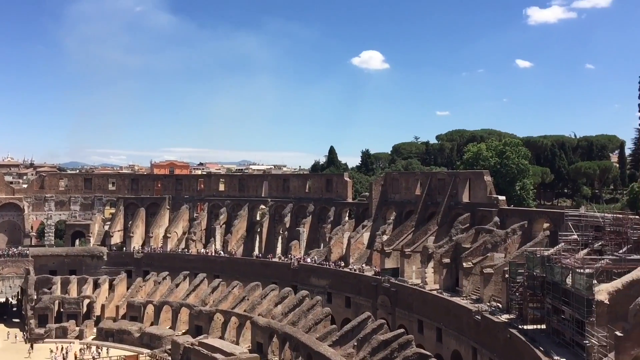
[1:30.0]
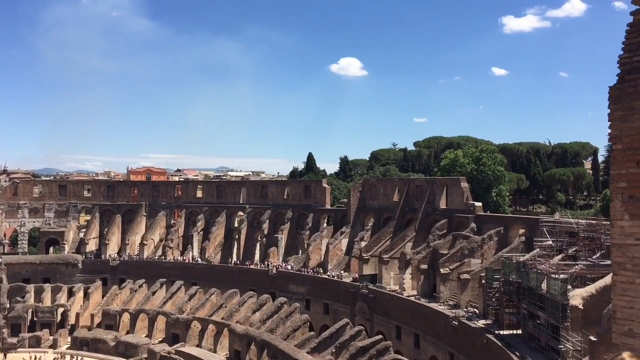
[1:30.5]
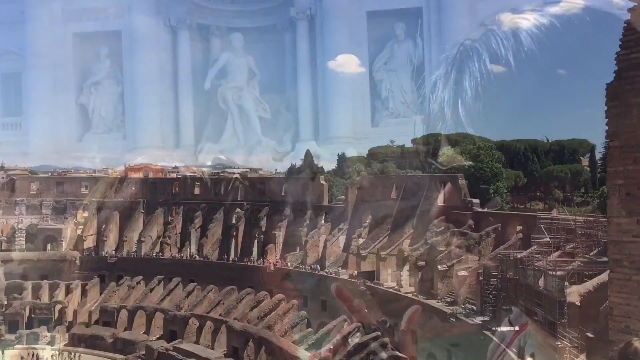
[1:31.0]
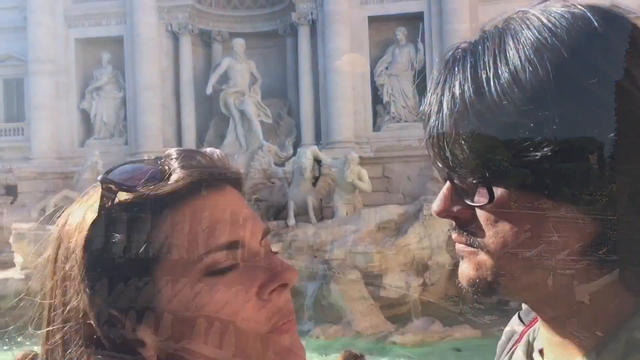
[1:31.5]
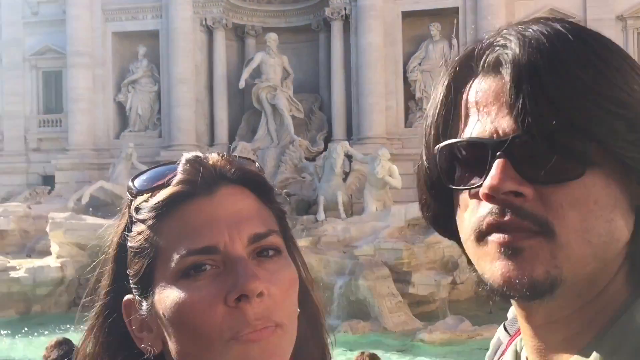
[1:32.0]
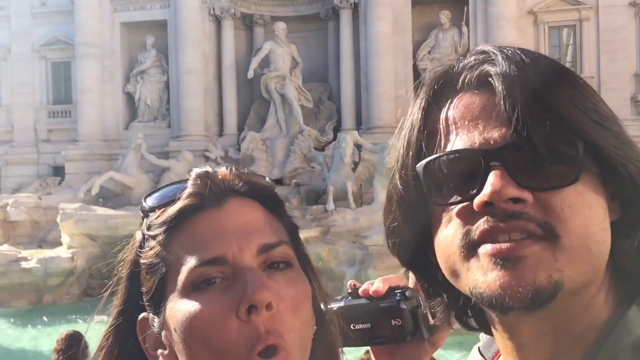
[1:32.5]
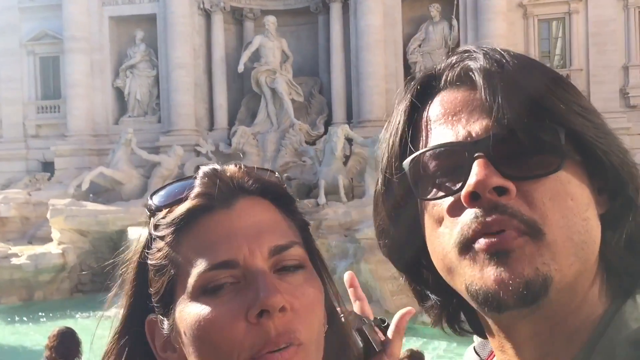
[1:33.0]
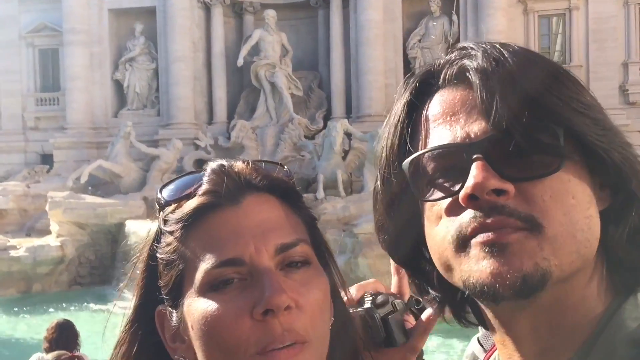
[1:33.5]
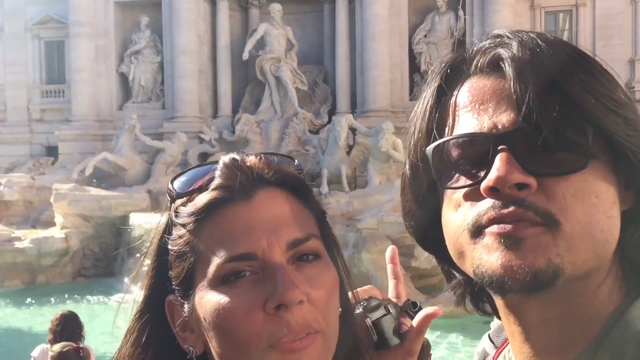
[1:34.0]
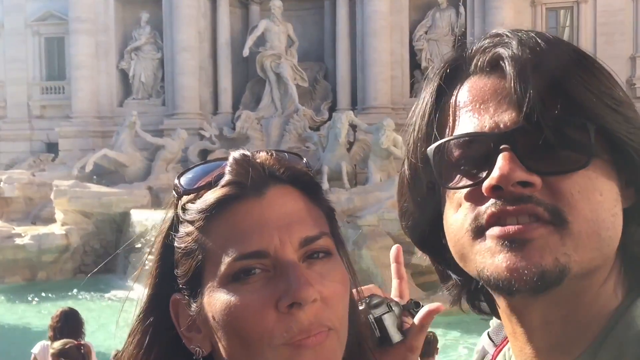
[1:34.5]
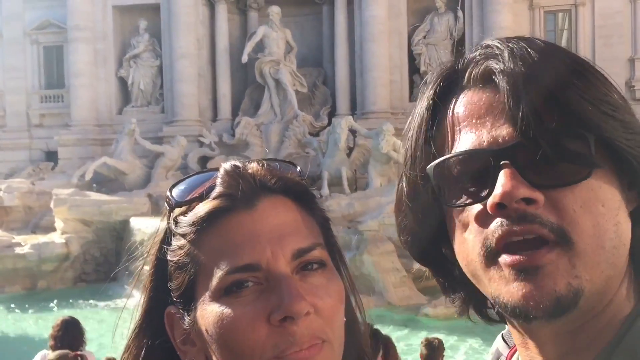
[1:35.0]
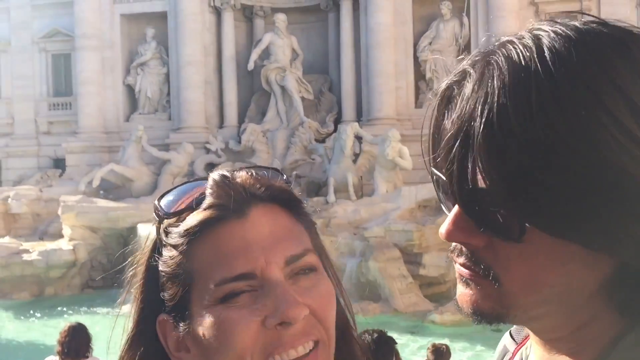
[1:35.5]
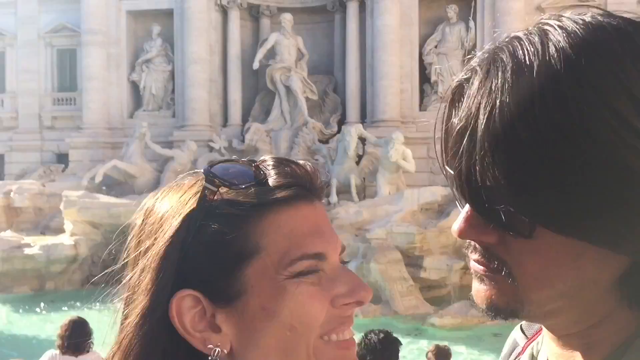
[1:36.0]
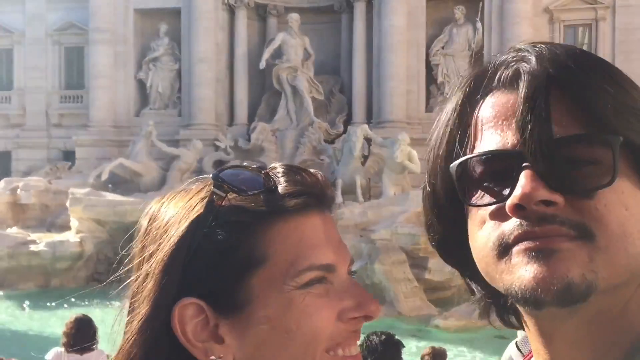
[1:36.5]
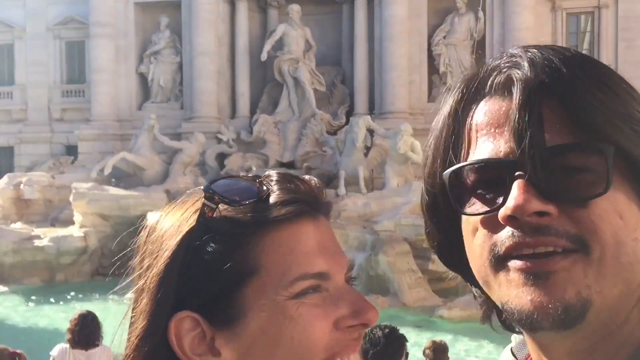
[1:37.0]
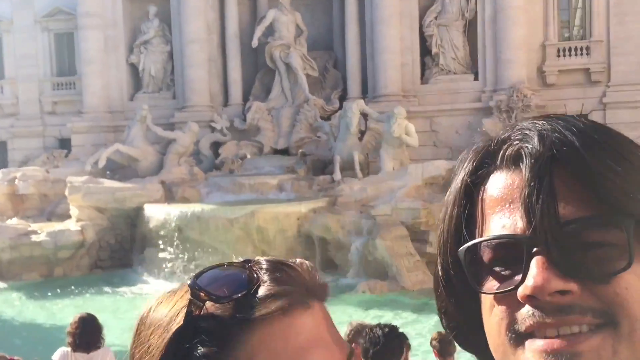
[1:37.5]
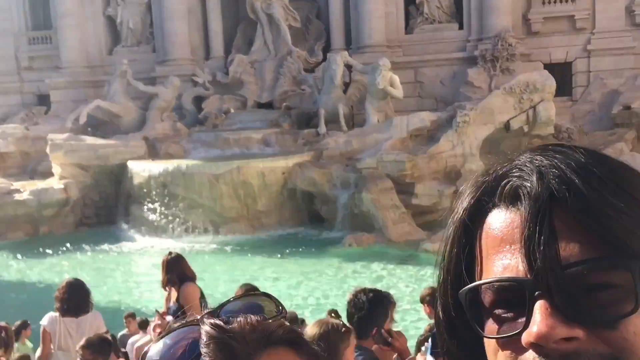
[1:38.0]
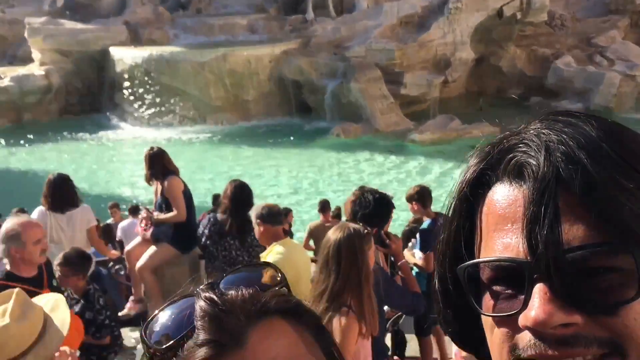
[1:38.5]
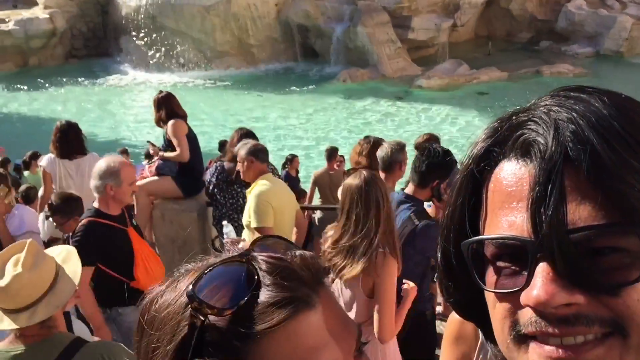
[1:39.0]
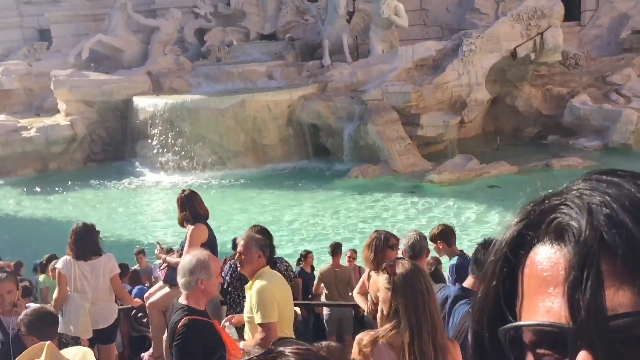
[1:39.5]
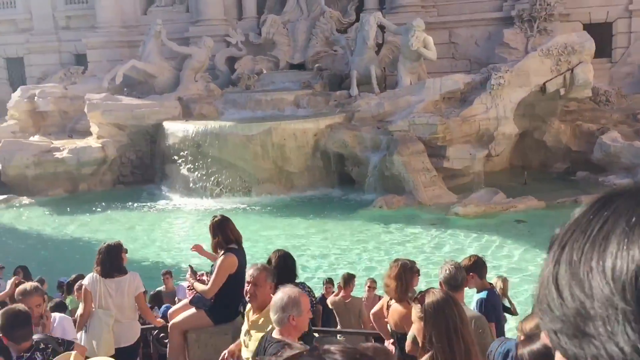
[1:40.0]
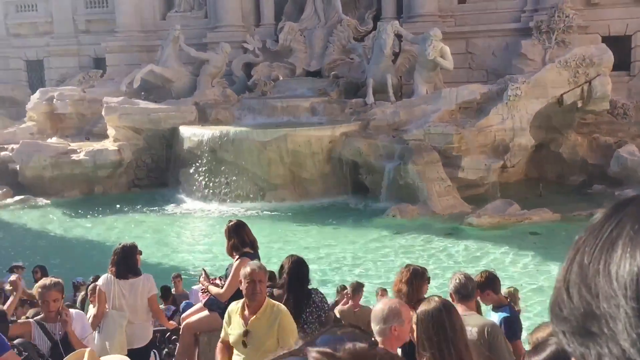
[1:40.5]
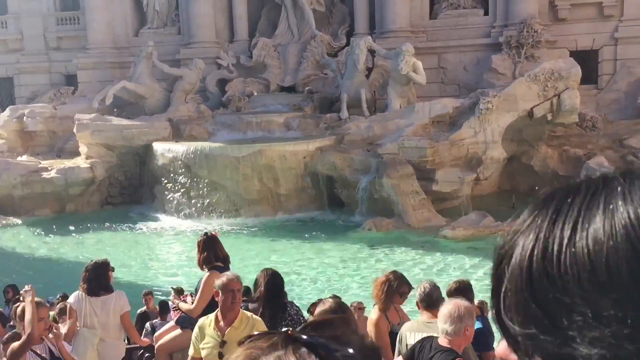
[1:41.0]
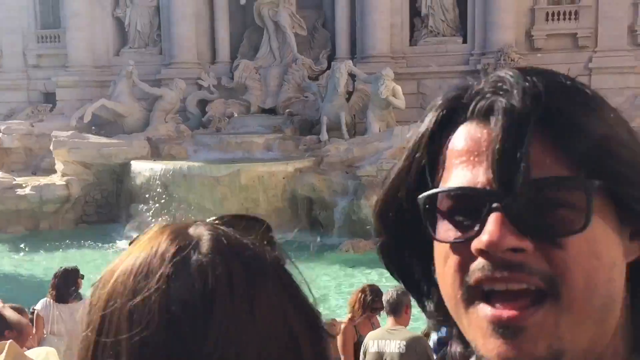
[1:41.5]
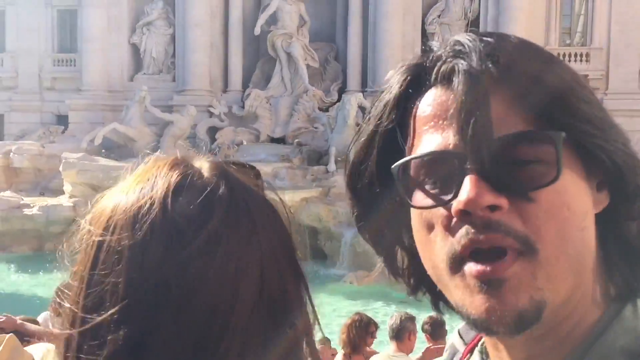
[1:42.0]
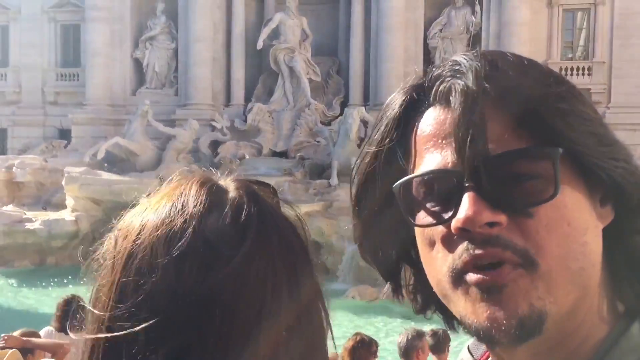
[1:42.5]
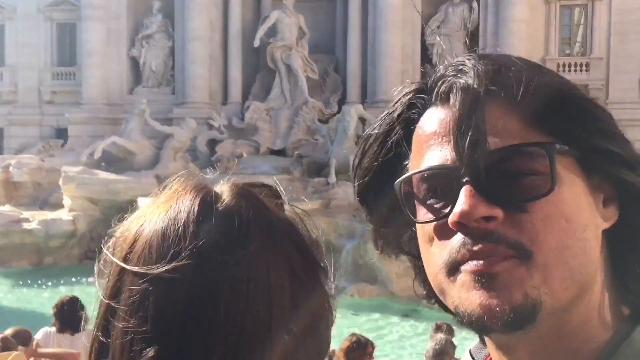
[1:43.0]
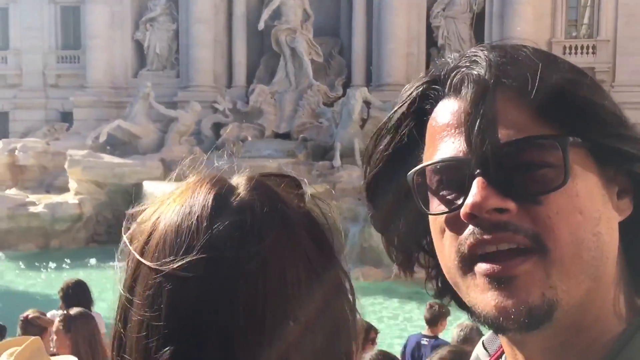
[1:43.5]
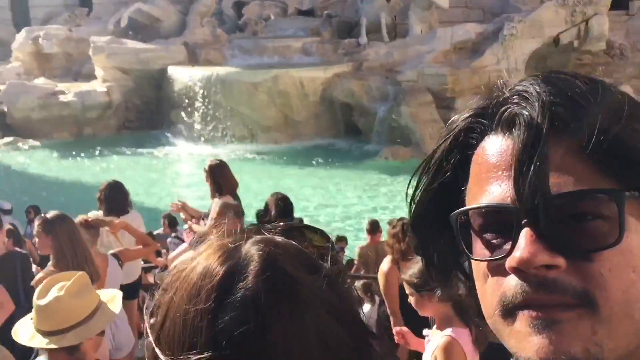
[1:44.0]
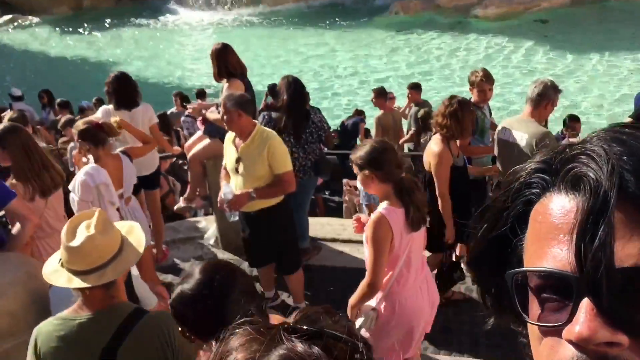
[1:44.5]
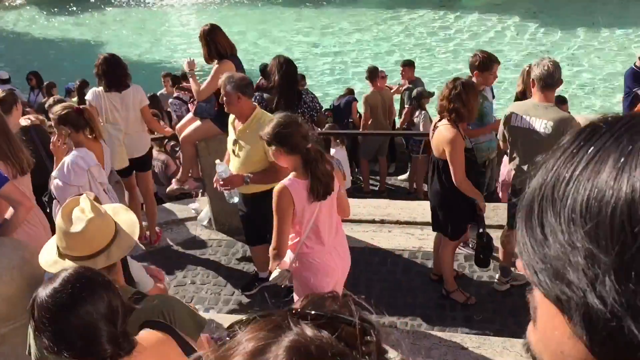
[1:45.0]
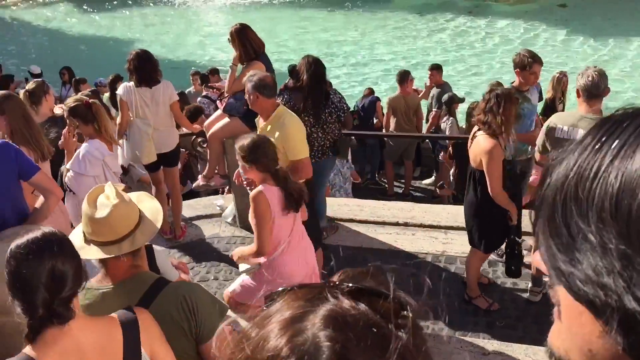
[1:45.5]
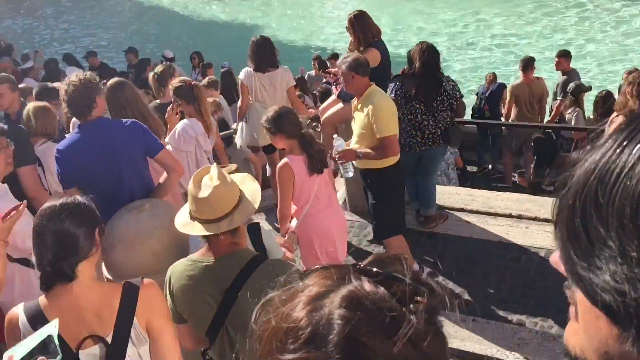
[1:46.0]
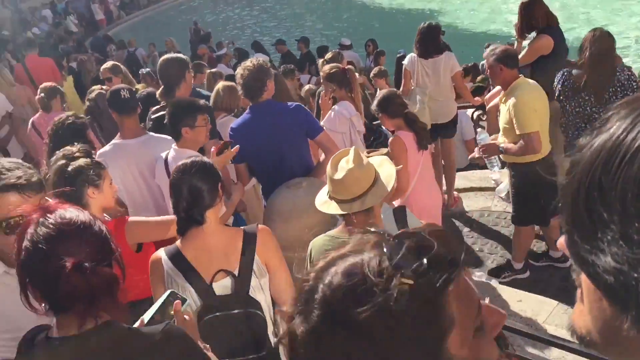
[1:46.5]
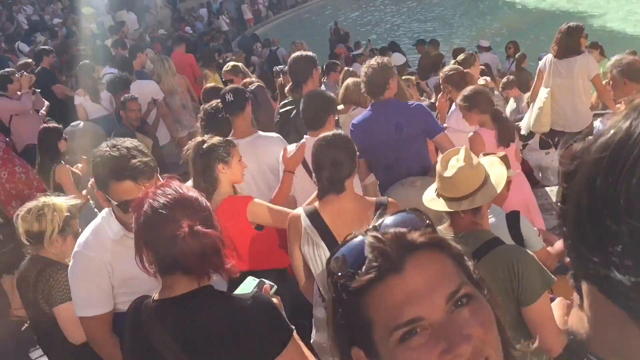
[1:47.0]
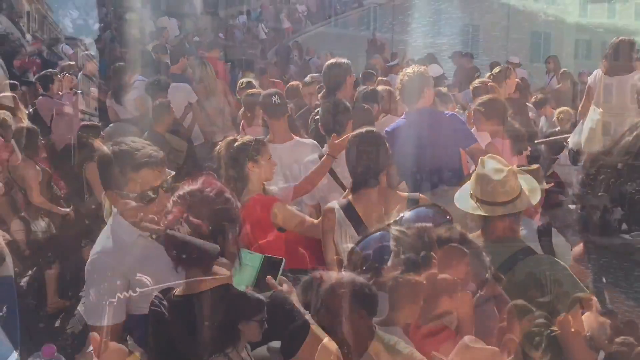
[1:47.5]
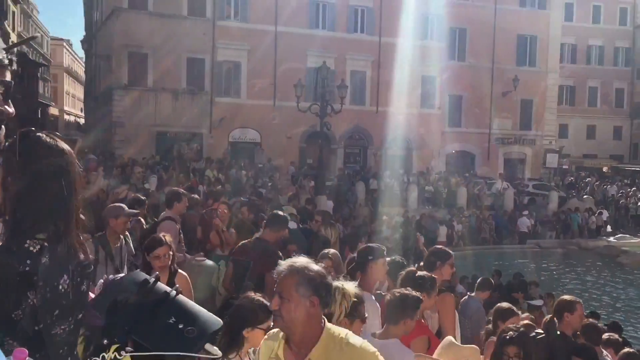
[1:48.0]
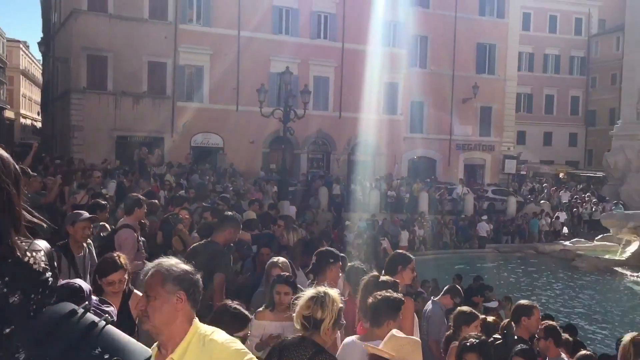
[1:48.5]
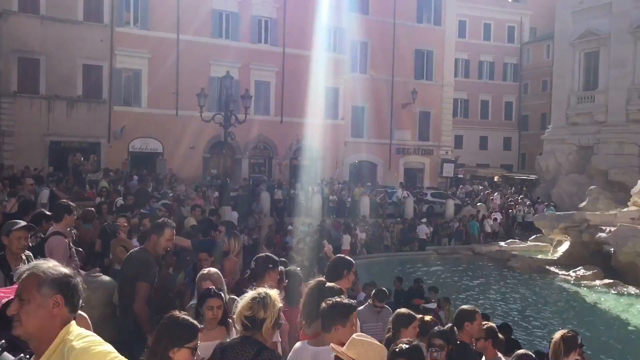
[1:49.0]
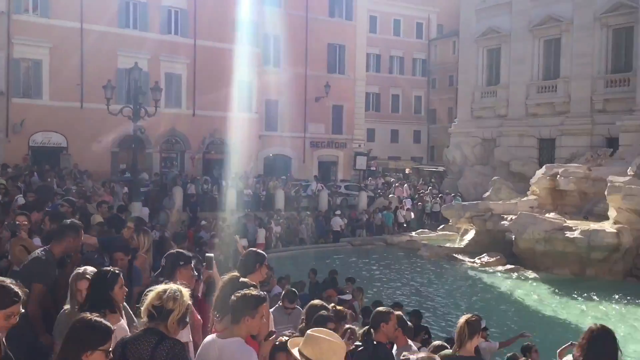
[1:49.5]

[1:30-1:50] A close-up of the upper walls of the Roman Colosseum shows a little of the buildings outside the Colosseum in the distance and some trees. The scene fades to a man and a woman standing in front of the Trevi Fountain, the camera very close to their faces. The man, on the right, has slightly long black hair and wears sunglasses; the woman, on the left, has long brown hair with her sunglasses pushed up on top of her head. He speaks to the camera and gestures to the fountain behind him. They look at each other, smile and nod, and then he holds the camera up high, revealing the water of the fountain and a large crowd assembled around it. Another view of the area shows the crowd wrapping completely around the sides of the fountain.